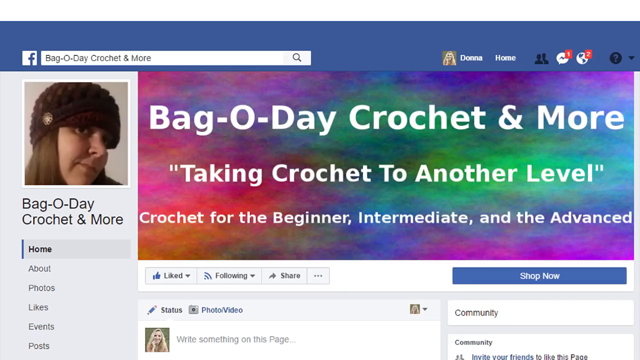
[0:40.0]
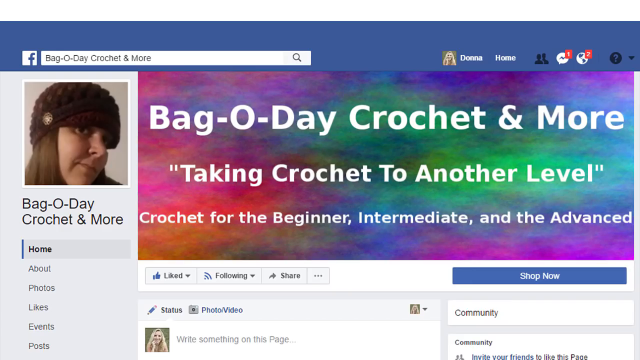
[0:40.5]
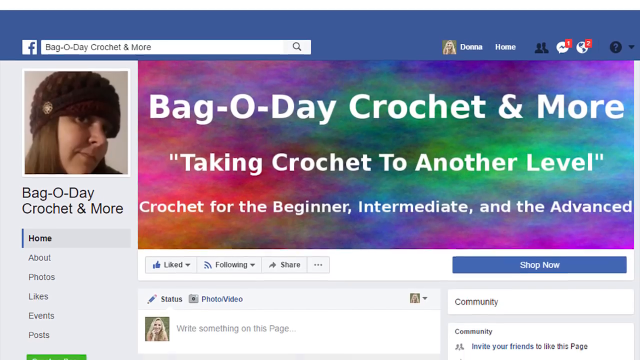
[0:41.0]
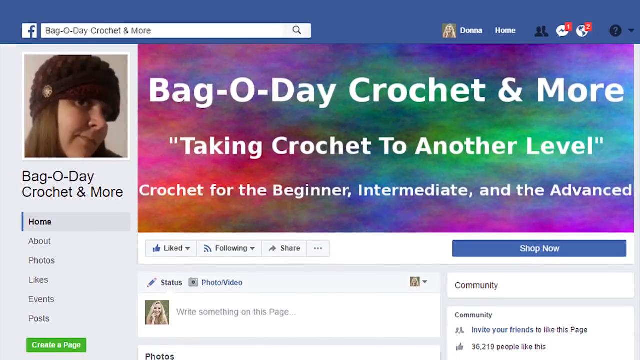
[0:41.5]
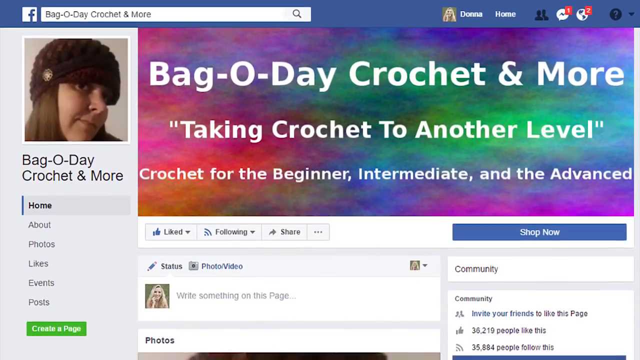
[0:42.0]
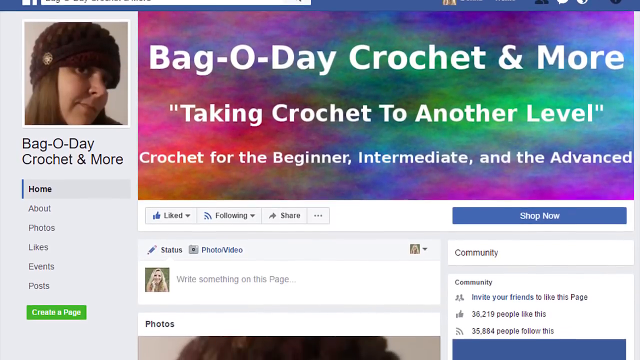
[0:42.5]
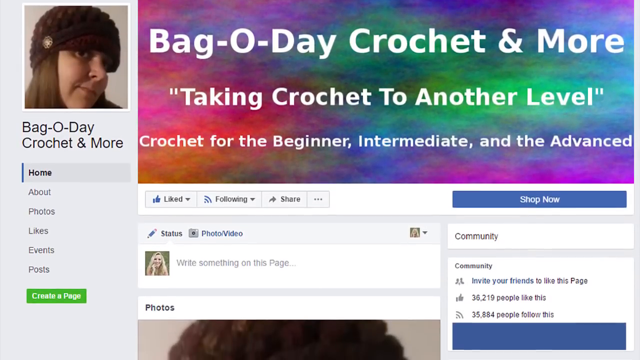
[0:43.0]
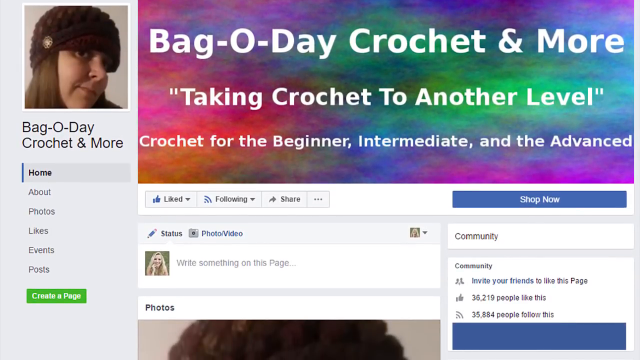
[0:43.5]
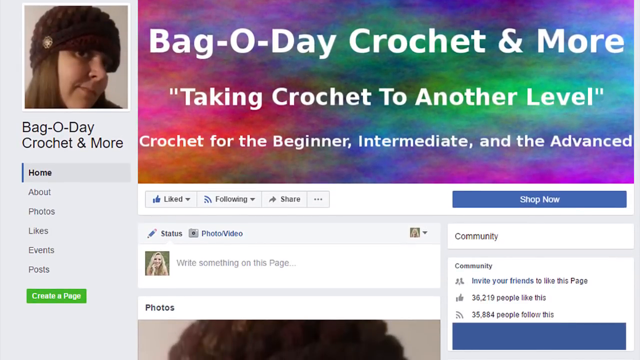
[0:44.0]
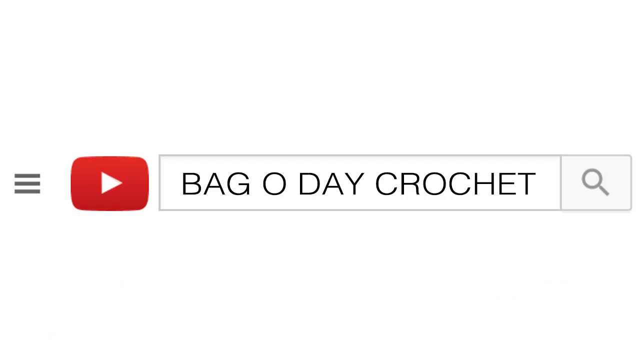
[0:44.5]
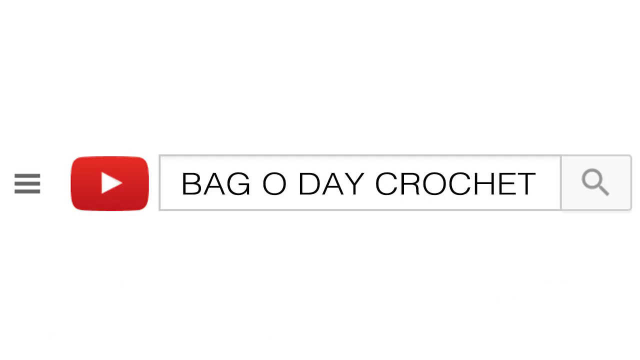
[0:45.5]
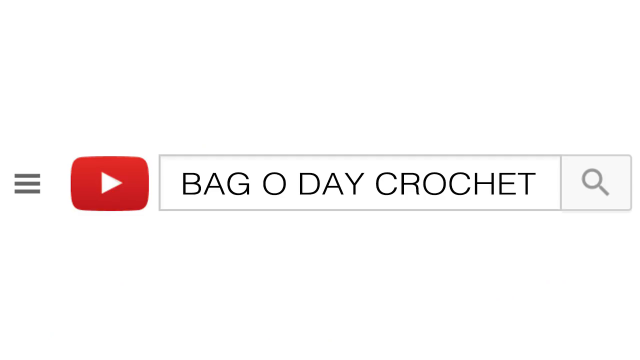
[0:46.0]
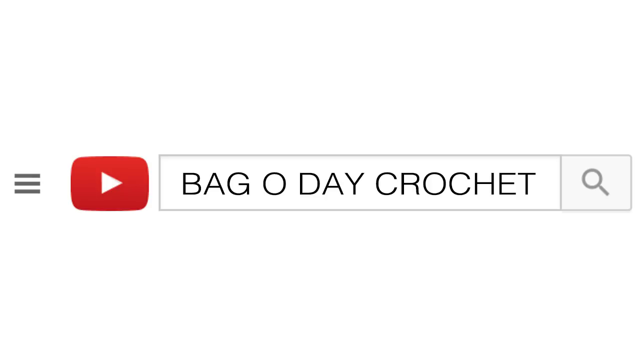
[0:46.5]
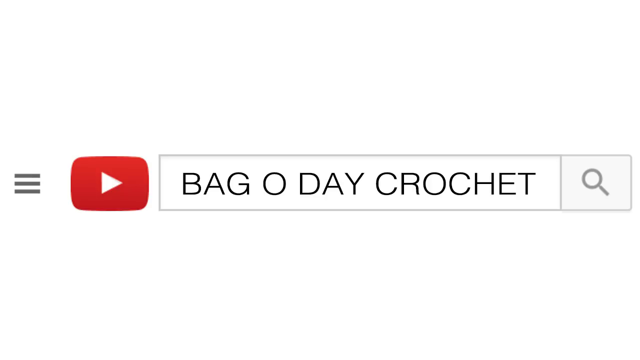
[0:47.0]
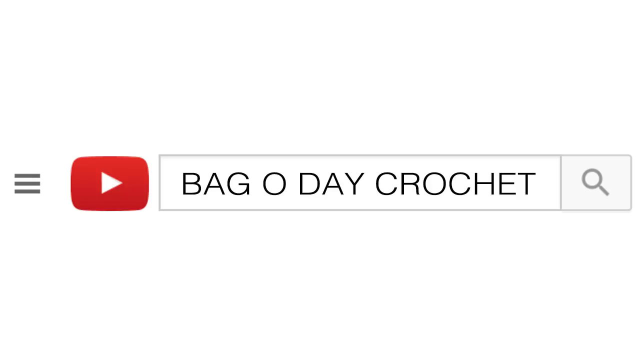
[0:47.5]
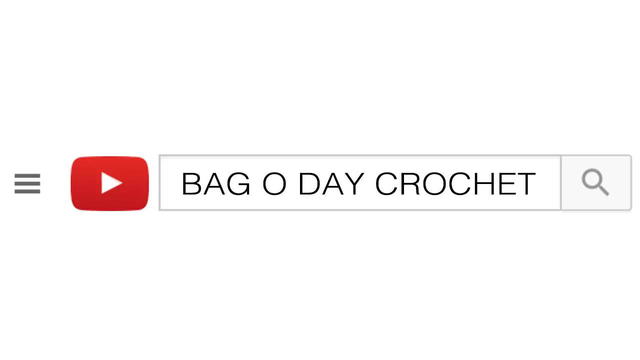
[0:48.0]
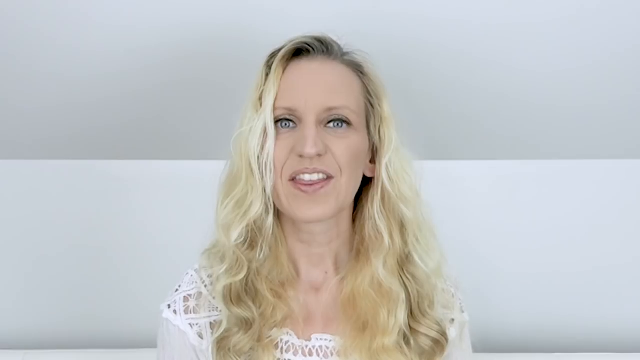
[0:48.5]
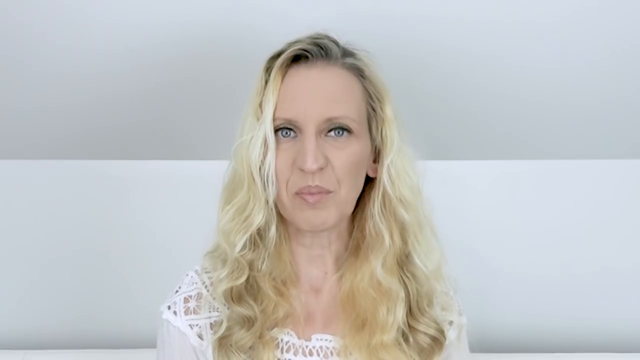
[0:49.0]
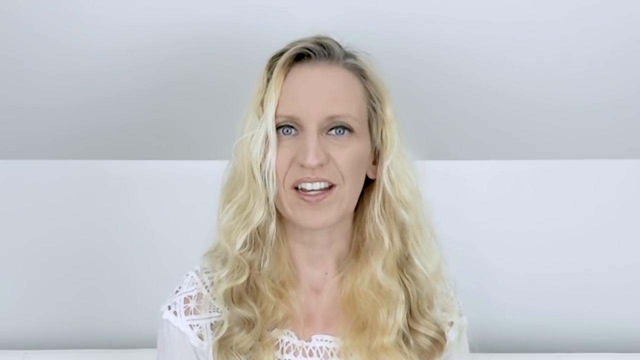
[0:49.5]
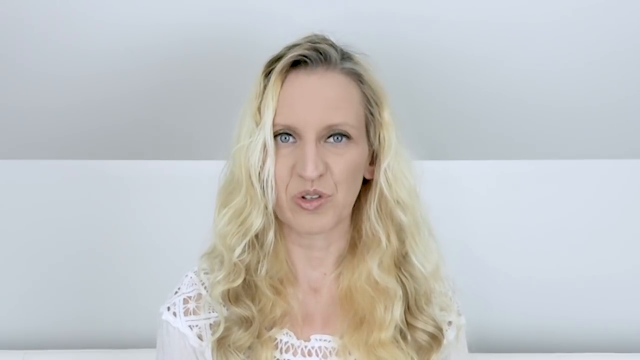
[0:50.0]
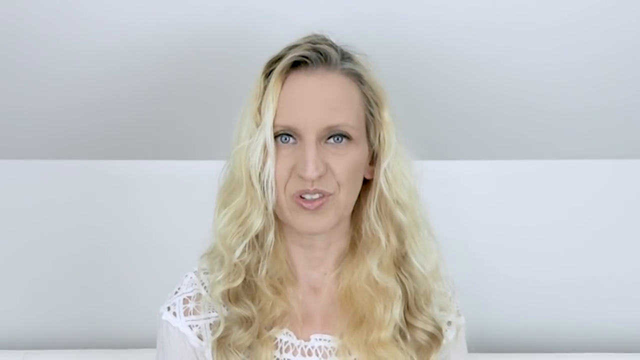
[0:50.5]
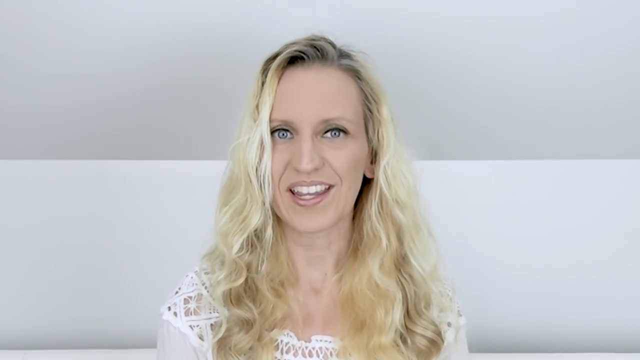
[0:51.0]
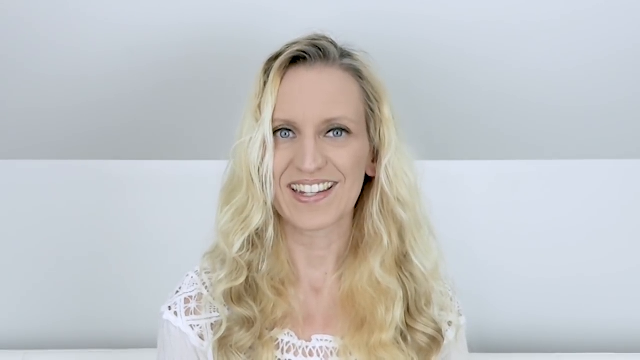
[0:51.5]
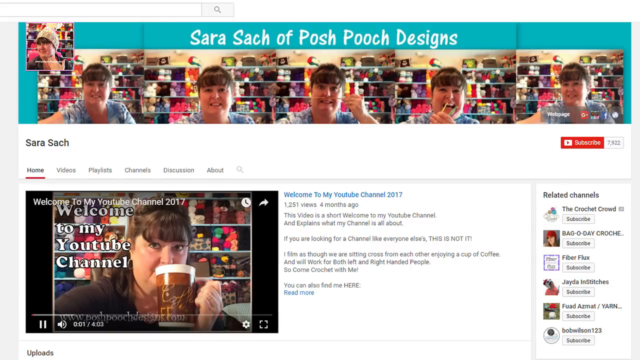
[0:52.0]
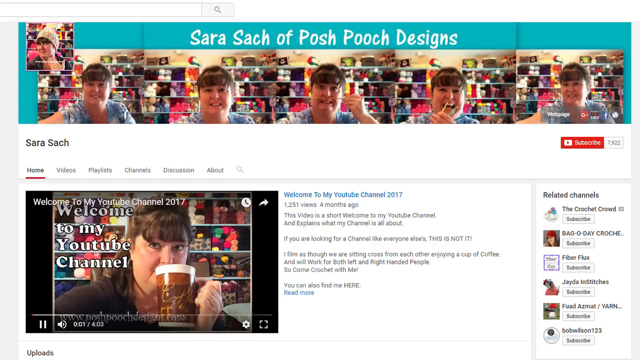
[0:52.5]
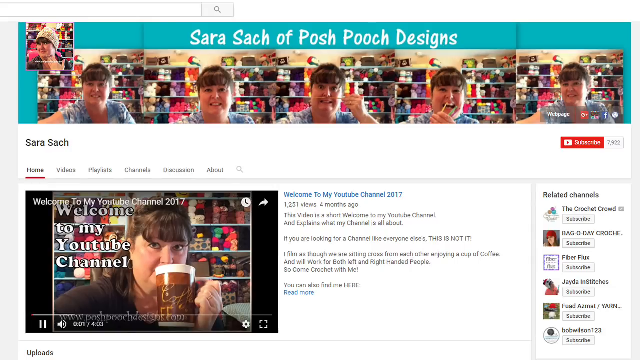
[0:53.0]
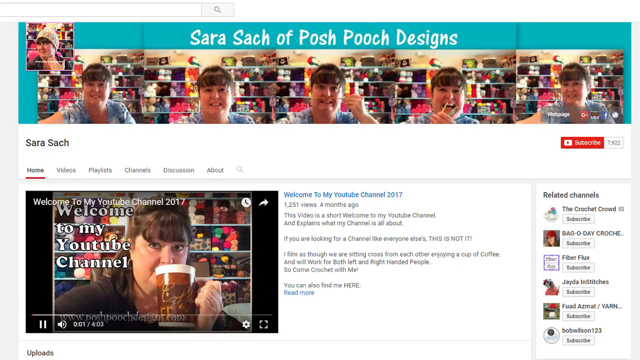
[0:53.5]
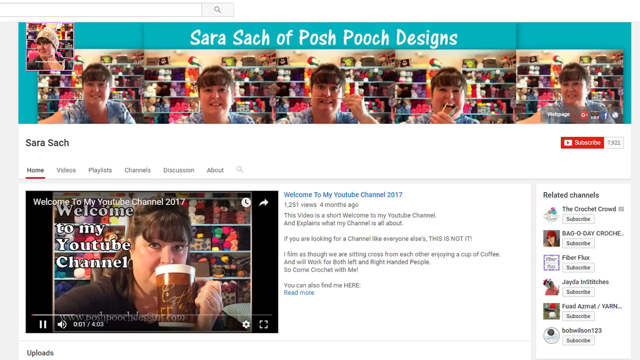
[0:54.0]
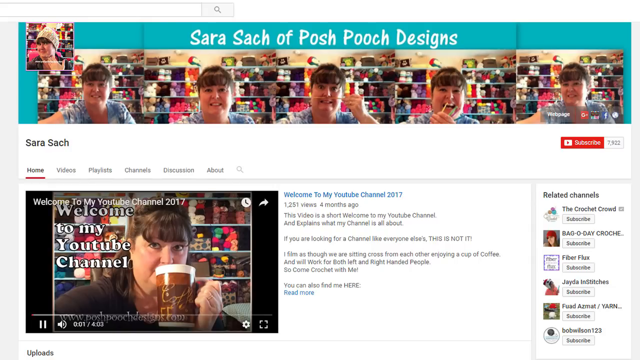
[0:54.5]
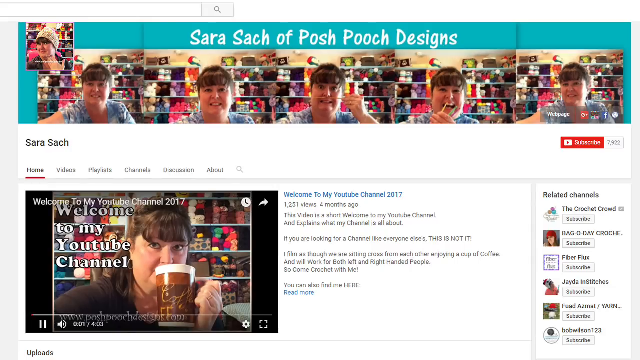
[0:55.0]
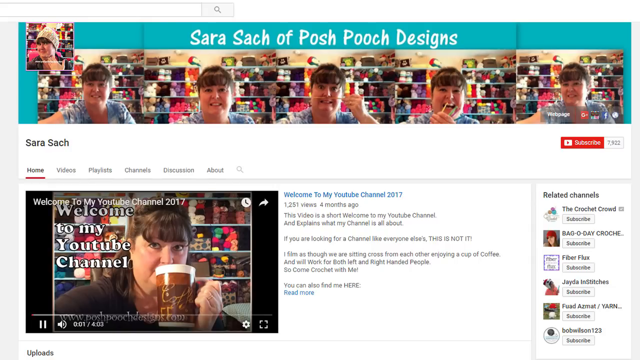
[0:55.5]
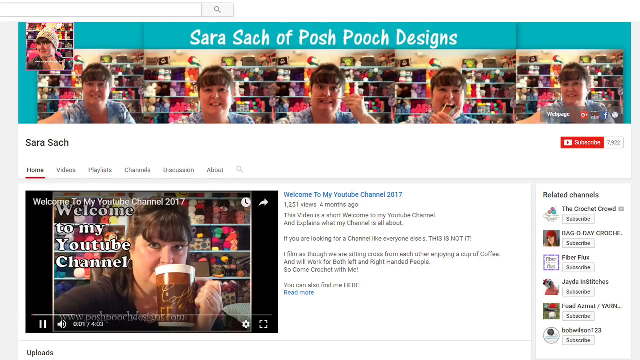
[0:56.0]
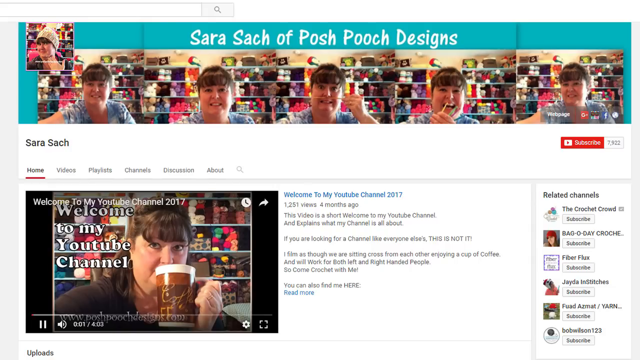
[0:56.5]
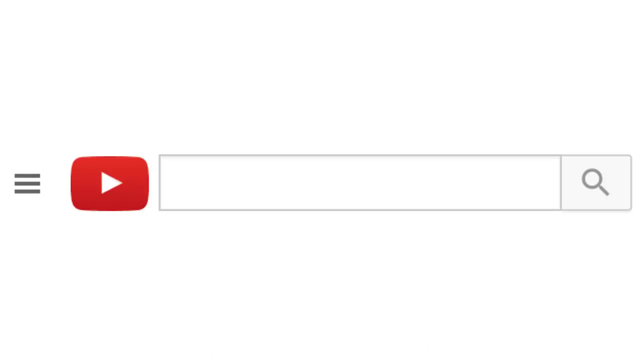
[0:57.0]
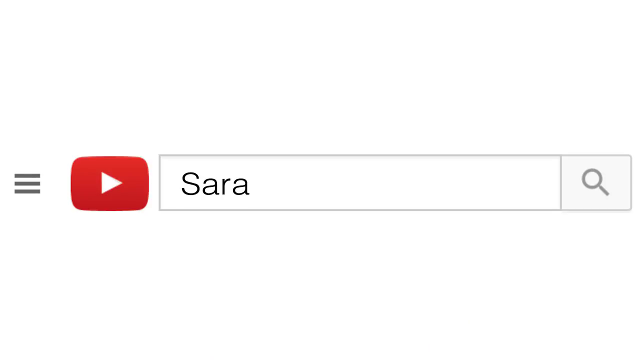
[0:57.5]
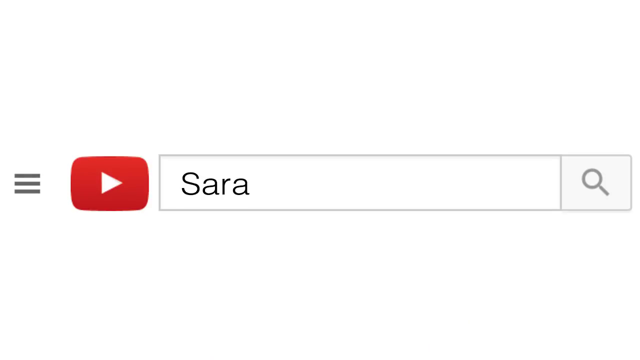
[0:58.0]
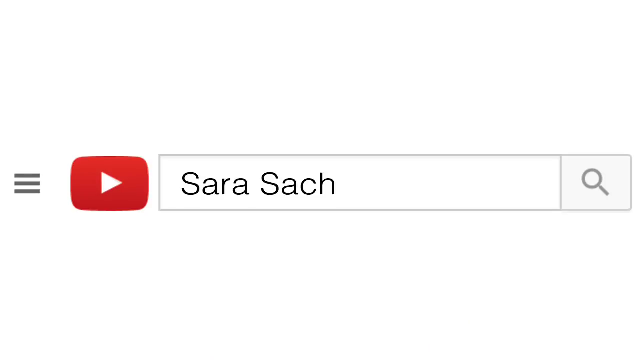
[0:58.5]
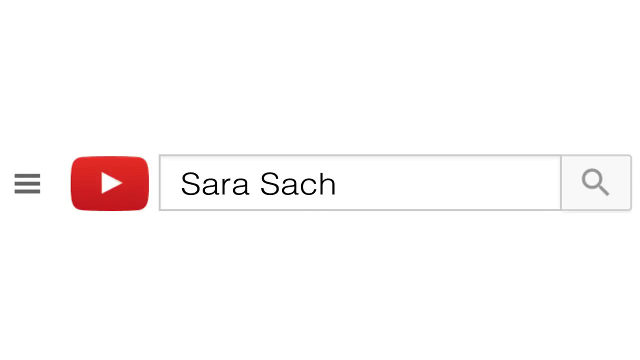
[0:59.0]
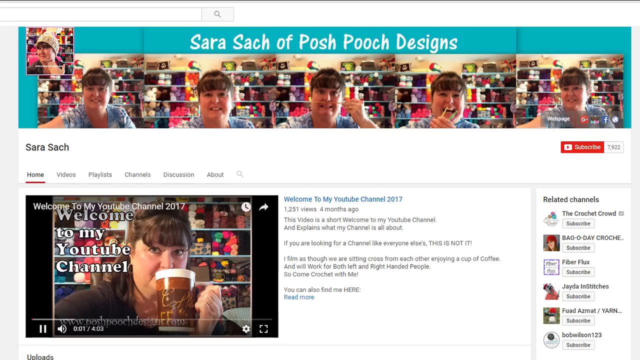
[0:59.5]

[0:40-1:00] The Facebook page is scrolled down a little, showing nothing much extra. In the community section on the right-hand side, 36,219 people like the page and 35,884 people follow it. The YouTube search screen appears, followed by the blonde-haired woman, who briefly says something to the camera. The next YouTube screen is for Sara Sach of Posh Pooch Design. In the top left-hand corner is a photograph of a dark-haired woman wearing a white beanie hat, and the banner at the top of the page shows five images of the same dark-haired woman, with a background filled with yarn in different colours, doing various things; in one she holds a crochet hook under her nose as if it is a moustache. She looks happy and smiley. The top video on the page is called "Welcome to my YouTube channel 2017" and has 1,251 views. The next screen shows the YouTube search bar with the words "Sara Sach" appearing.